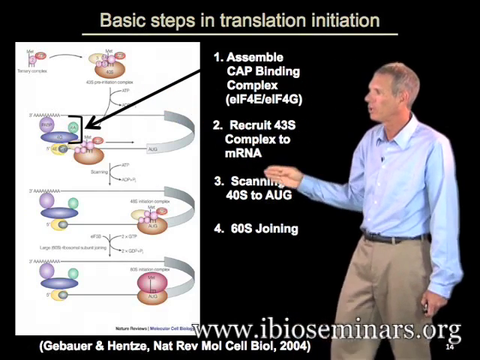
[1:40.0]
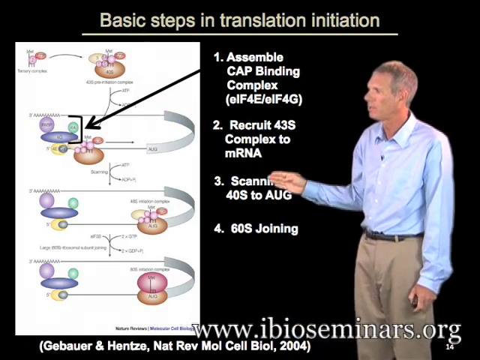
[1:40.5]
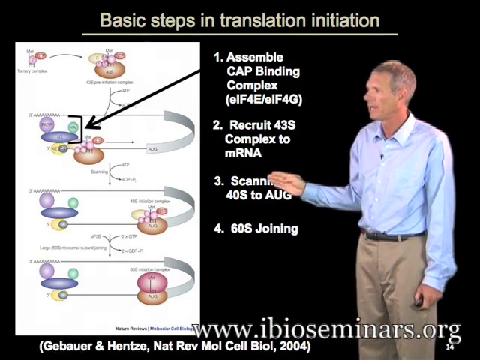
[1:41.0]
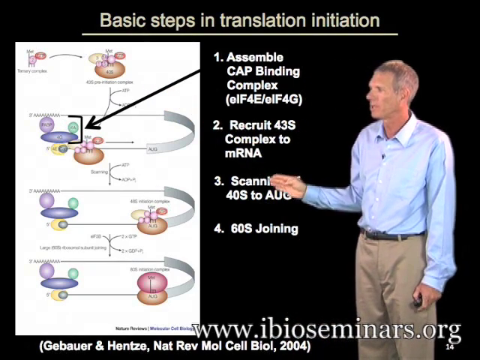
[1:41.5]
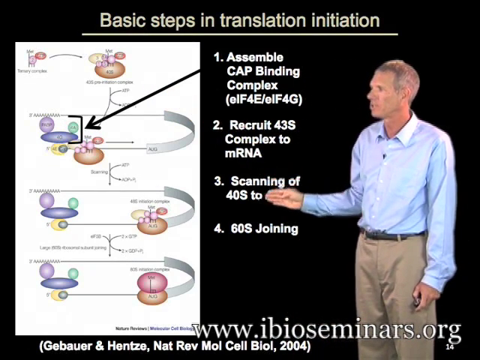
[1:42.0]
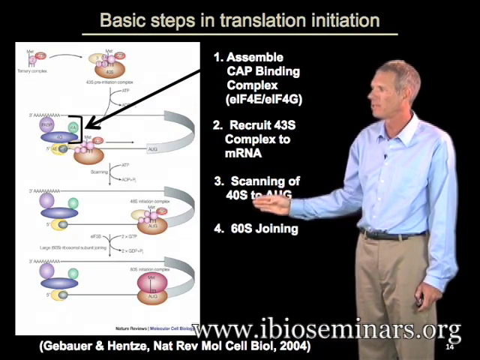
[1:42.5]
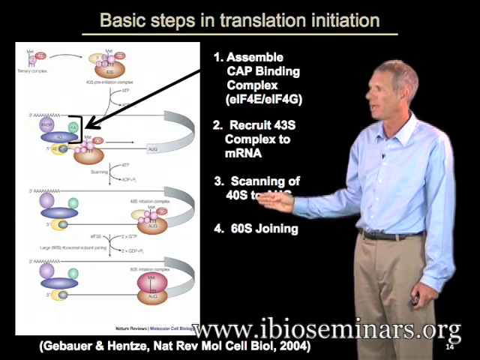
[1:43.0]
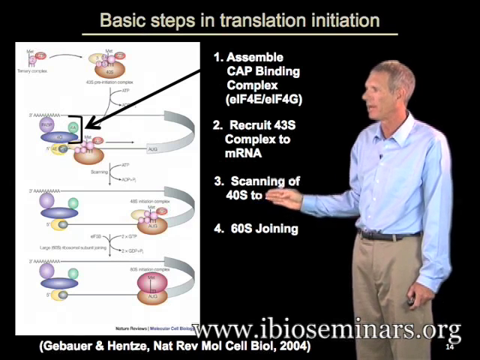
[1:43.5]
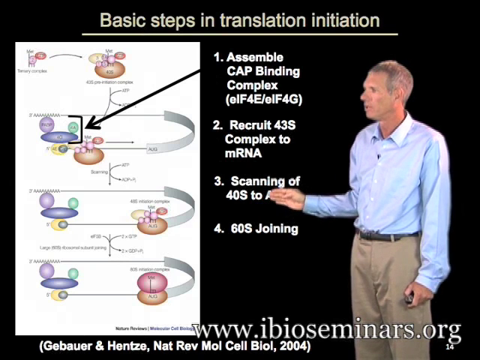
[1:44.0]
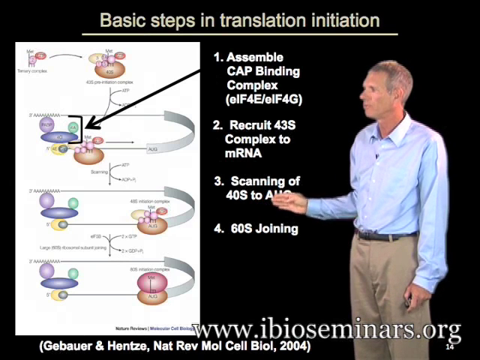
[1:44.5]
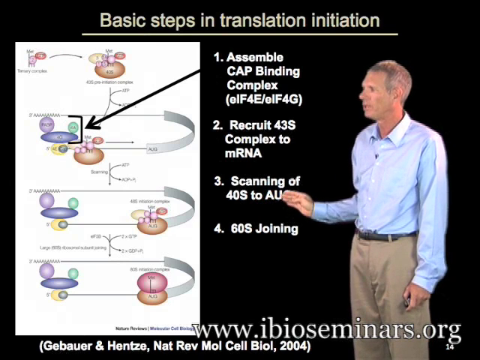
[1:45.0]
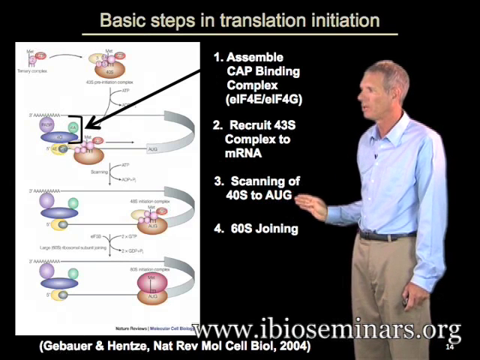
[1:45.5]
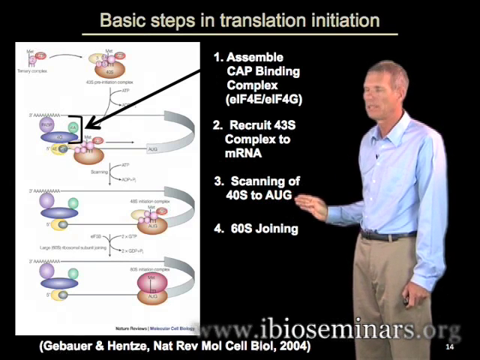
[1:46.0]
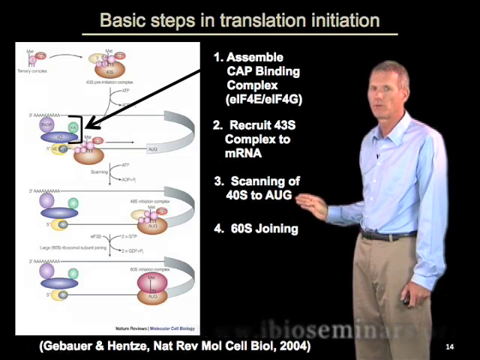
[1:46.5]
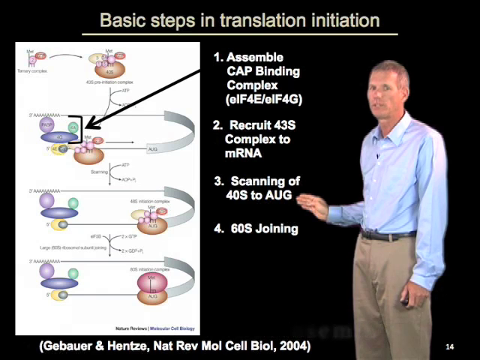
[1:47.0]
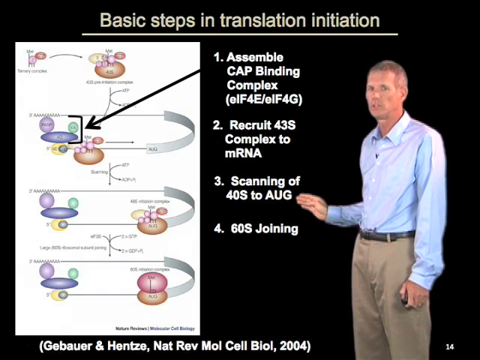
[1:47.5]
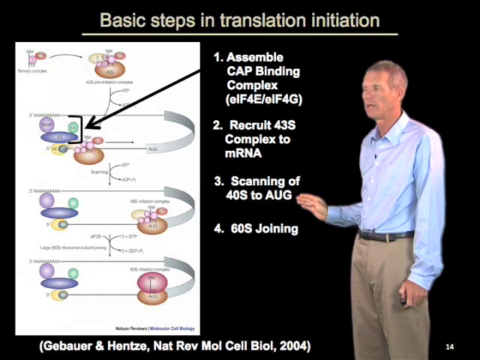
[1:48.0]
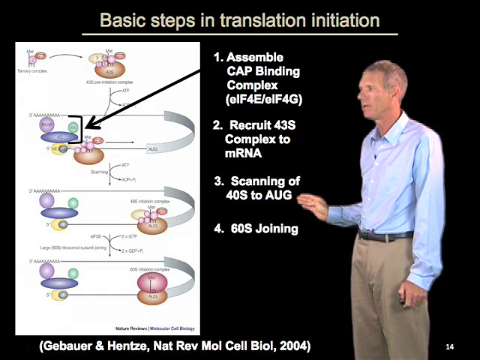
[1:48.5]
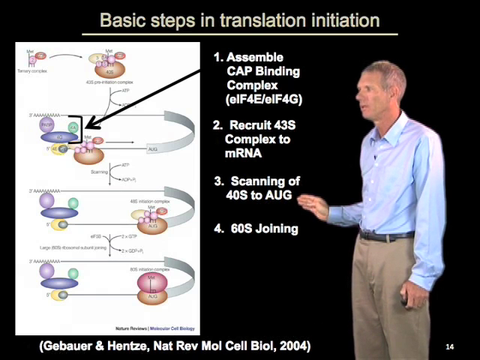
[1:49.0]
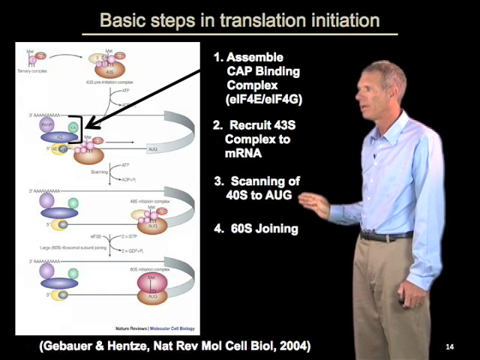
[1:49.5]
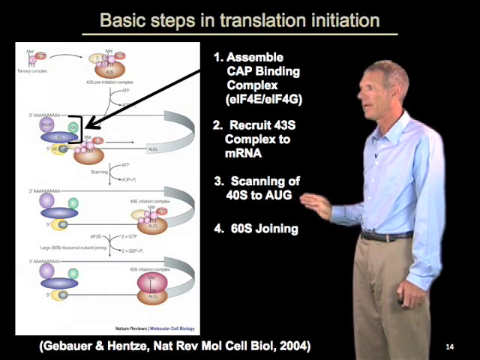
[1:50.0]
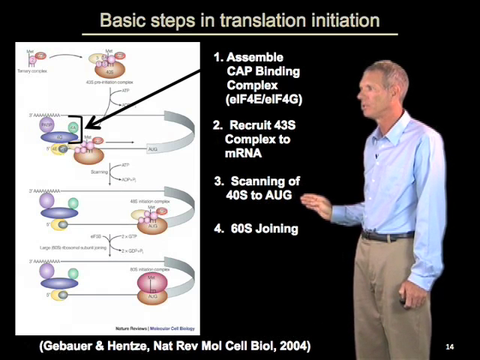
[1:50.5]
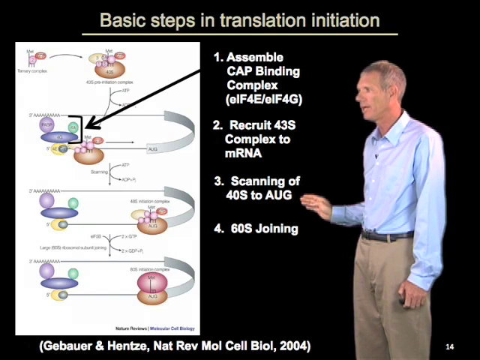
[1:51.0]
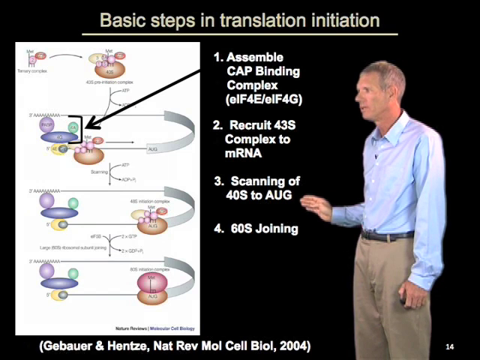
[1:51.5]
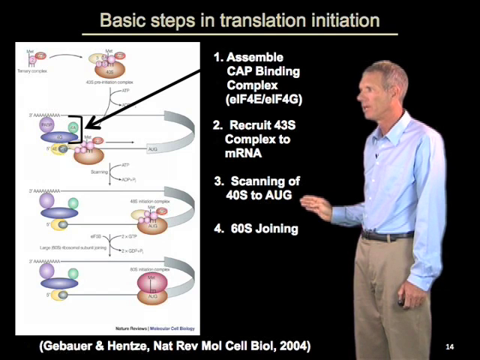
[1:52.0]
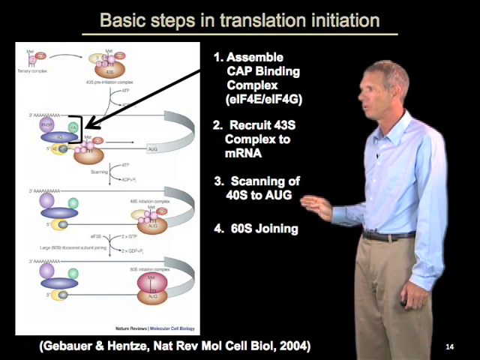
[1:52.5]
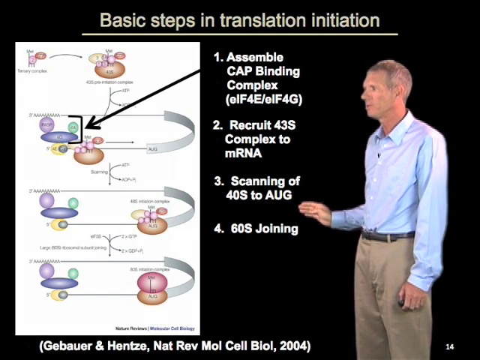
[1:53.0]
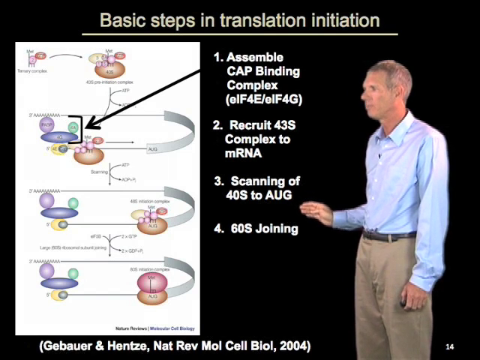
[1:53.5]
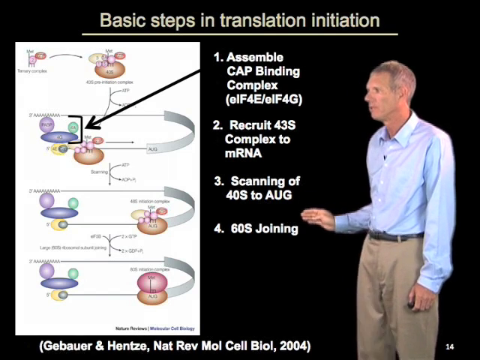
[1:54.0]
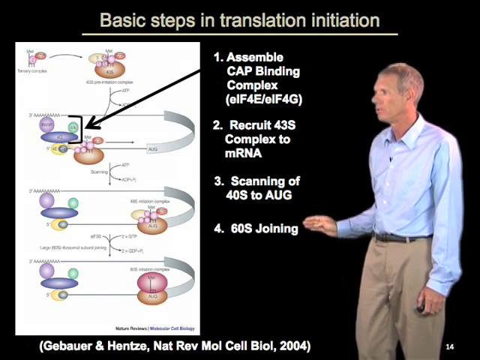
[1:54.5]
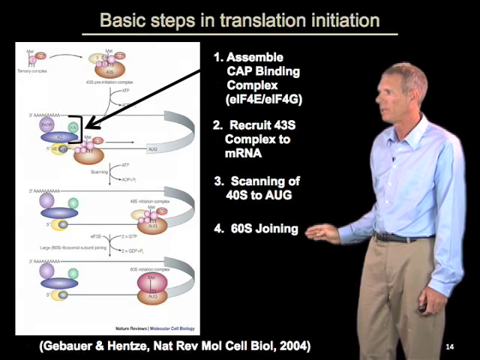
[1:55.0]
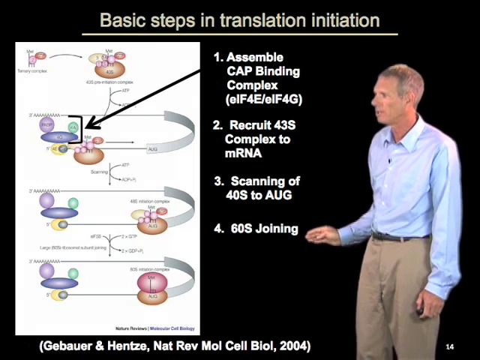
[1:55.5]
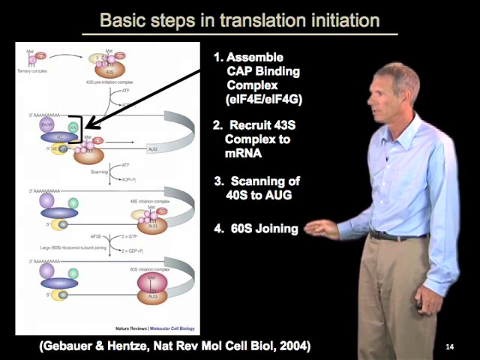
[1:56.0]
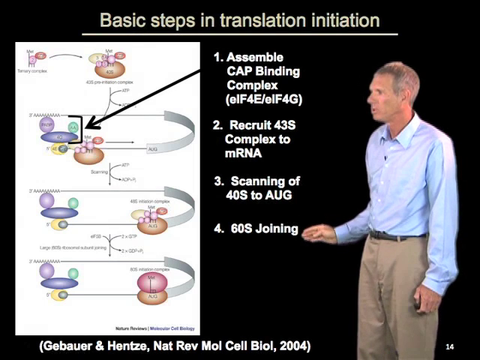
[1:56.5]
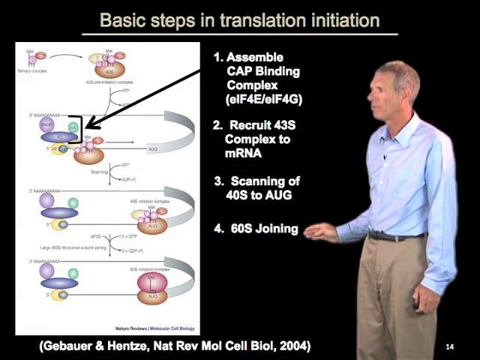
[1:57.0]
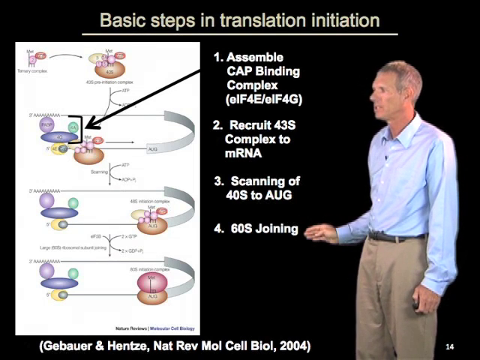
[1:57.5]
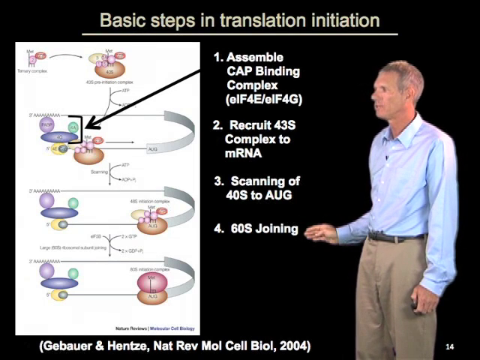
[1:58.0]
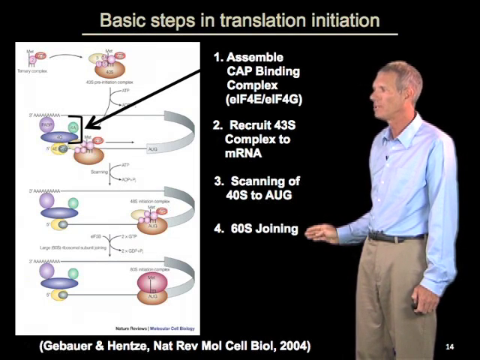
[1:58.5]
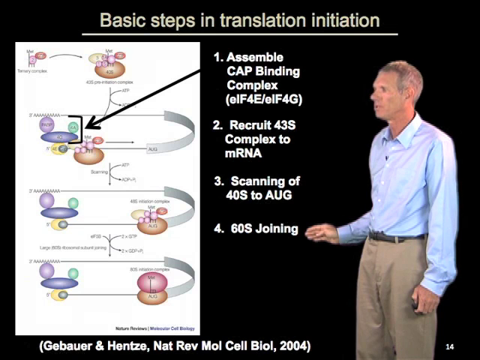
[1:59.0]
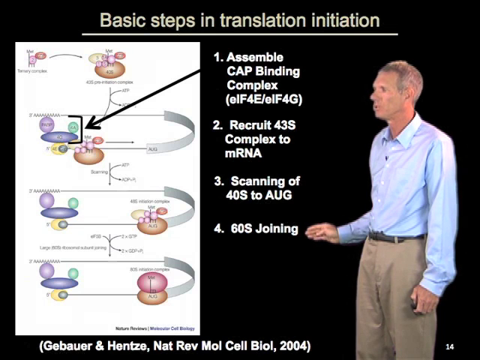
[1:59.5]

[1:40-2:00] The chart of the basic steps in translation initiation shows four steps. Step one is "assemble cap binding complex," followed in parentheses by a complicated string of letters and numbers. Step two is "recruit 43S complex to mRNA," step three is "scanning 40S to AUG," and step four is "60S joining." Pictures accompany the steps, showing changes from picture to picture. The man wears khaki pants and a light blue long-sleeved shirt, holds a clicker in his left hand and uses his right hand to point to different areas. He is white, with kind of gray hair, and clean-shaven.